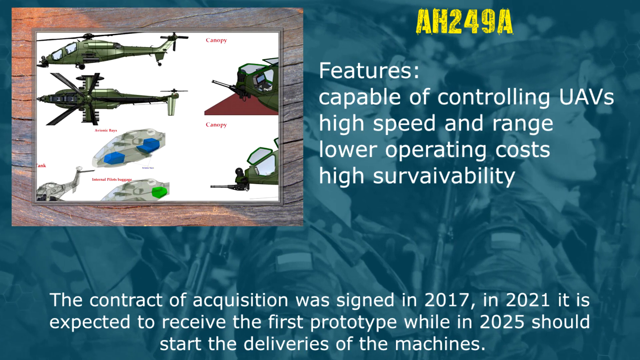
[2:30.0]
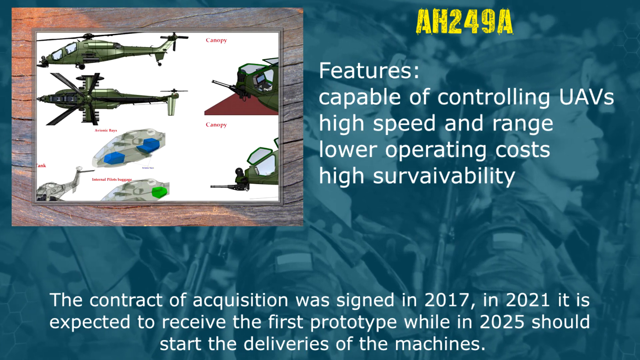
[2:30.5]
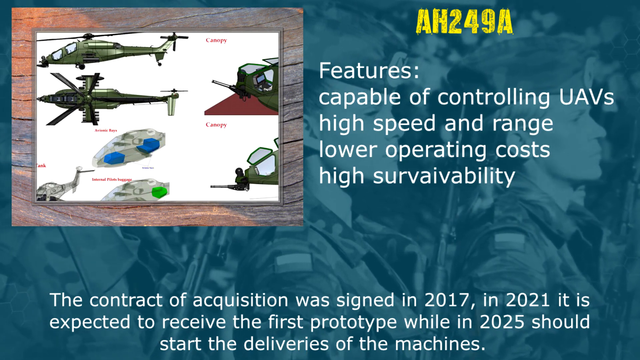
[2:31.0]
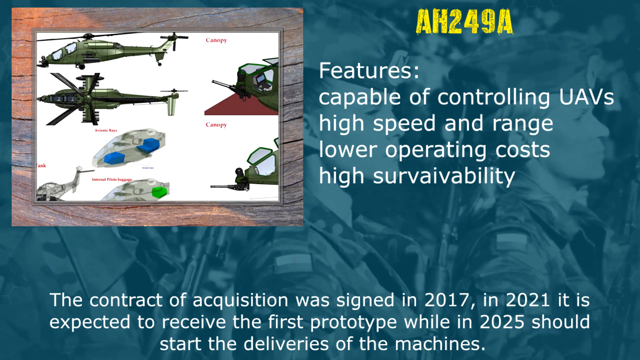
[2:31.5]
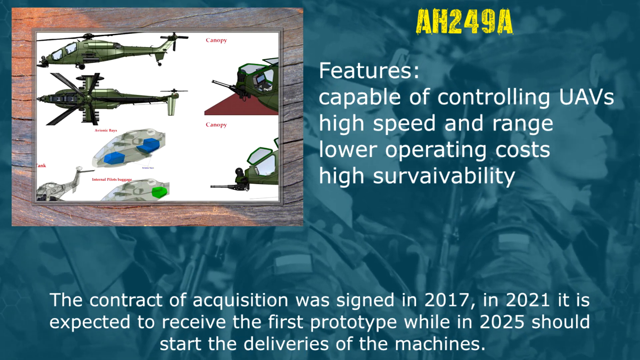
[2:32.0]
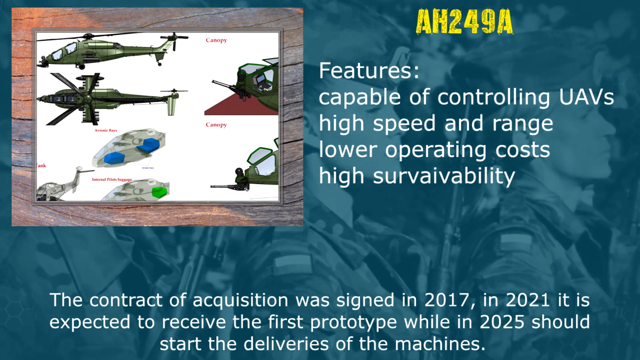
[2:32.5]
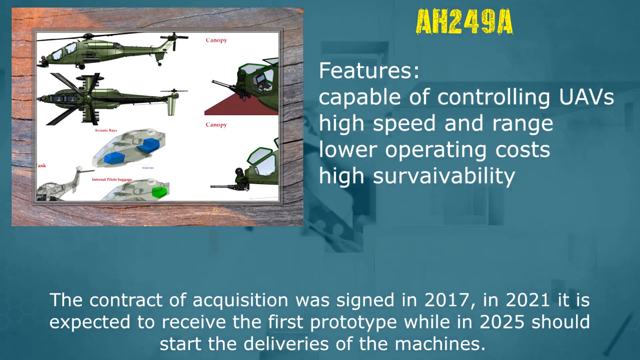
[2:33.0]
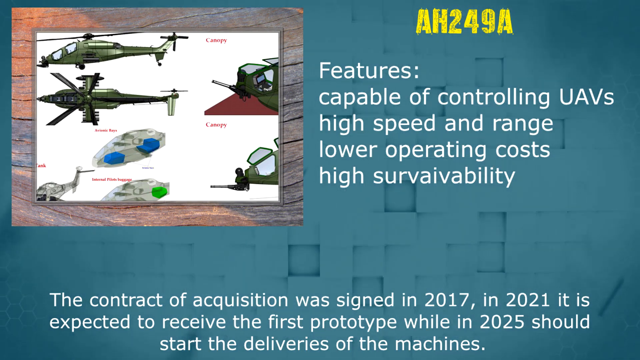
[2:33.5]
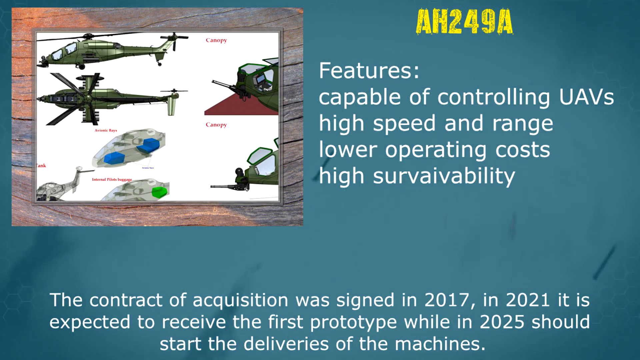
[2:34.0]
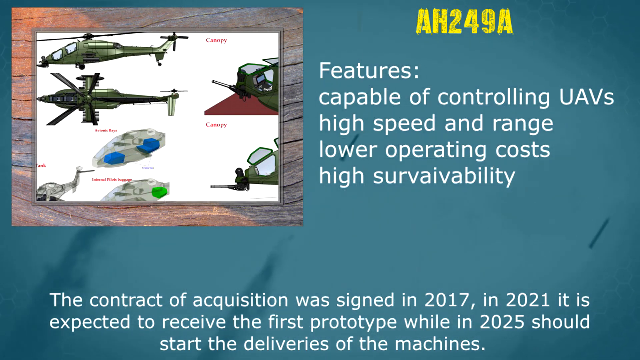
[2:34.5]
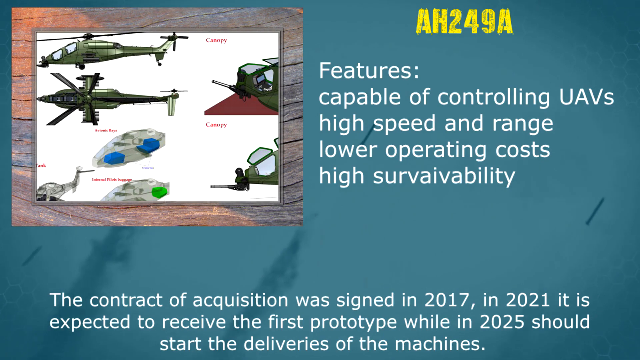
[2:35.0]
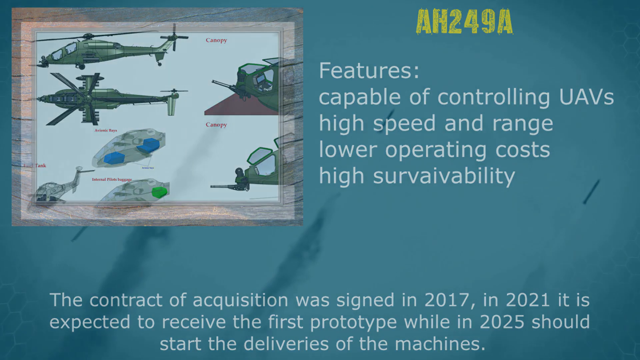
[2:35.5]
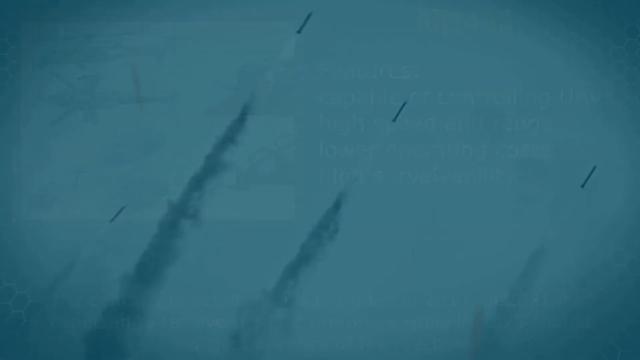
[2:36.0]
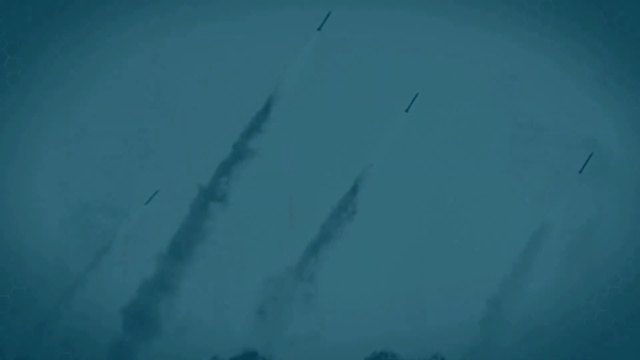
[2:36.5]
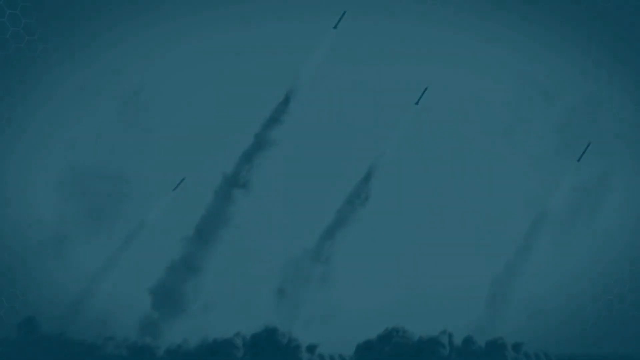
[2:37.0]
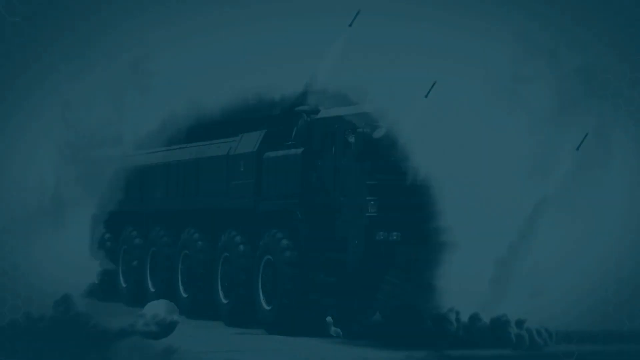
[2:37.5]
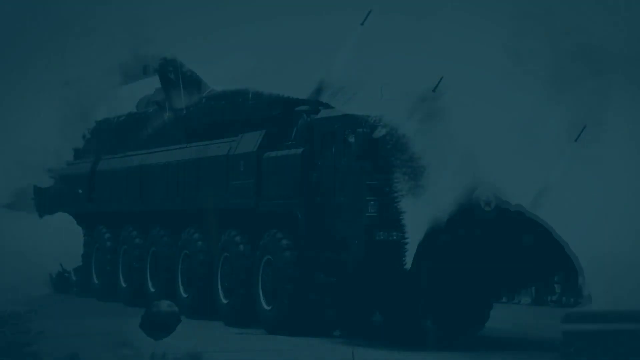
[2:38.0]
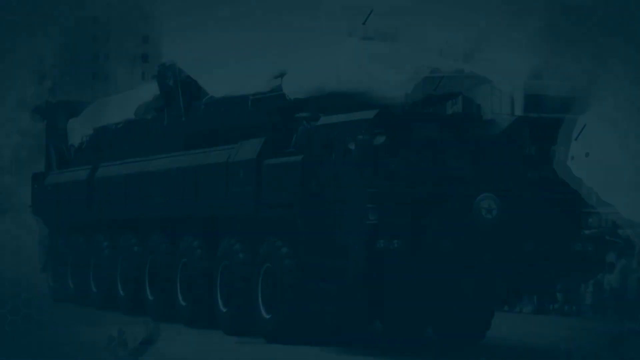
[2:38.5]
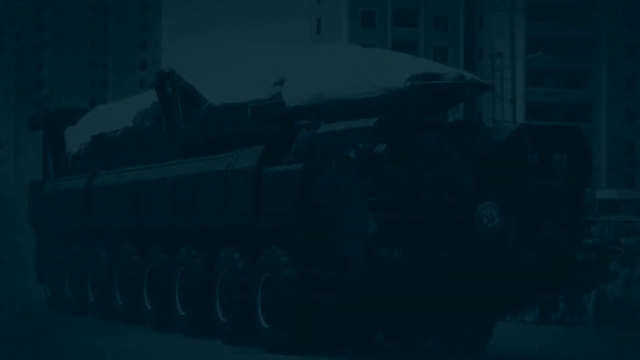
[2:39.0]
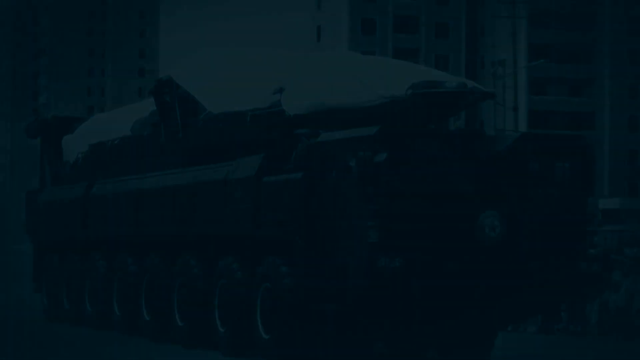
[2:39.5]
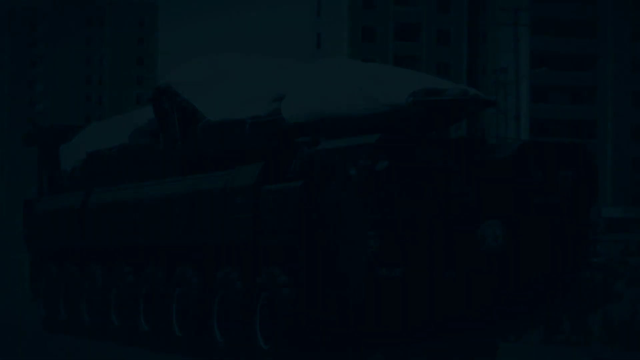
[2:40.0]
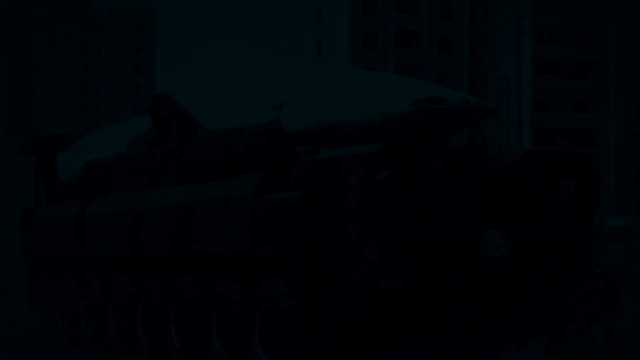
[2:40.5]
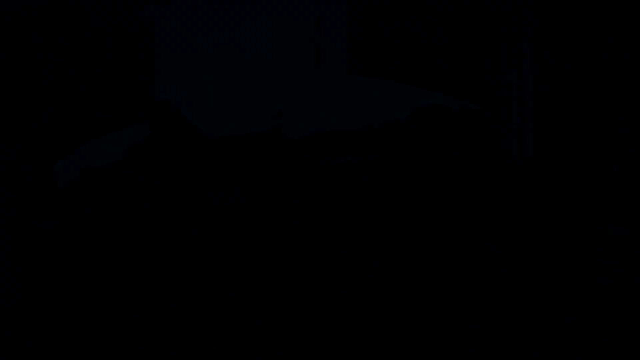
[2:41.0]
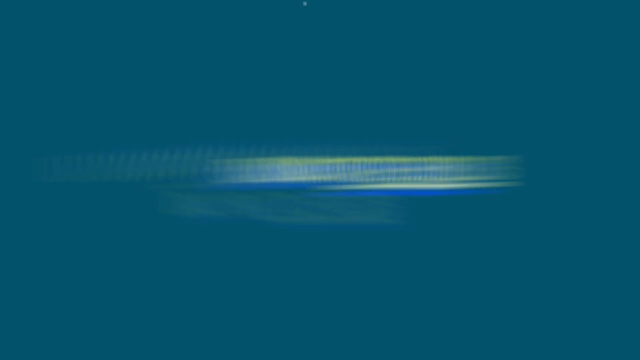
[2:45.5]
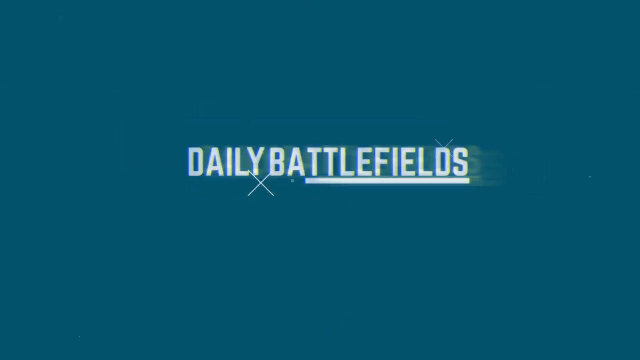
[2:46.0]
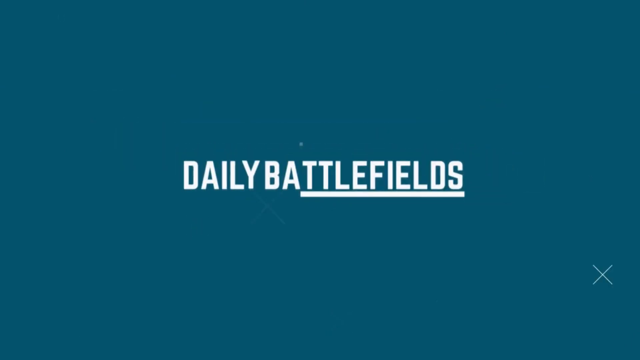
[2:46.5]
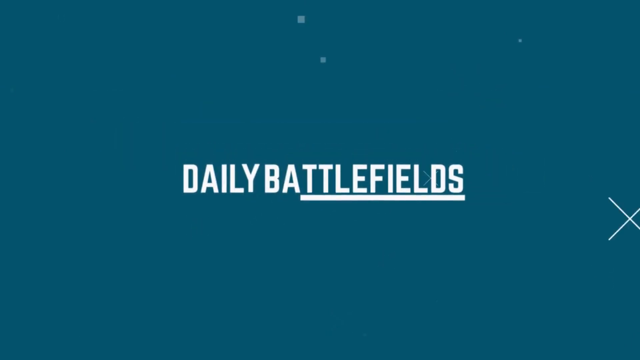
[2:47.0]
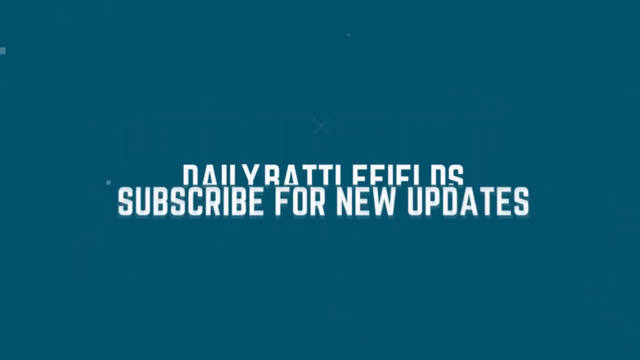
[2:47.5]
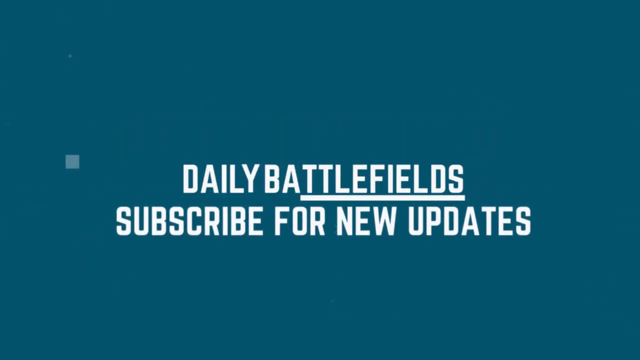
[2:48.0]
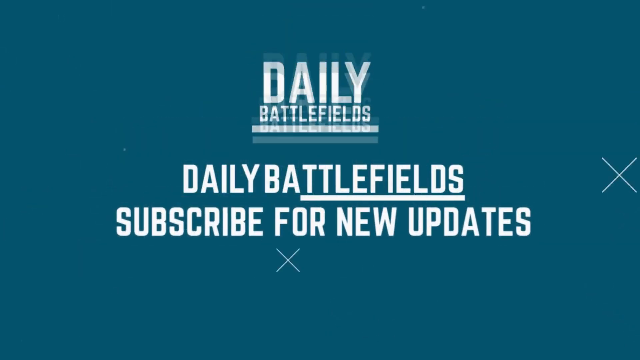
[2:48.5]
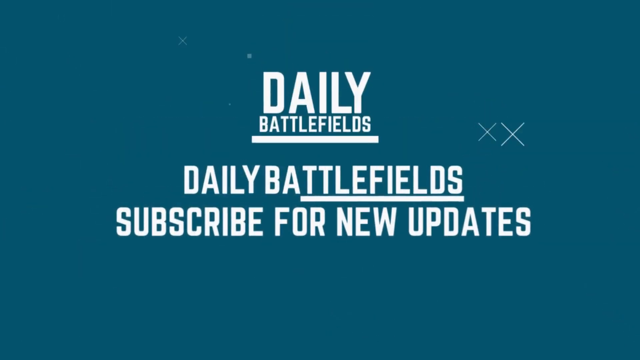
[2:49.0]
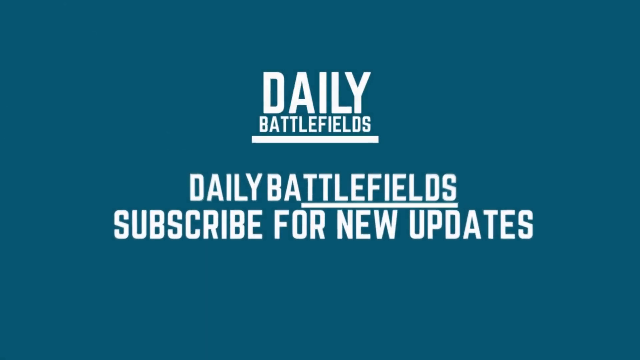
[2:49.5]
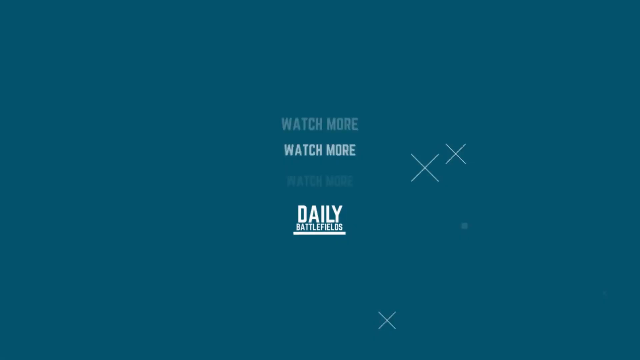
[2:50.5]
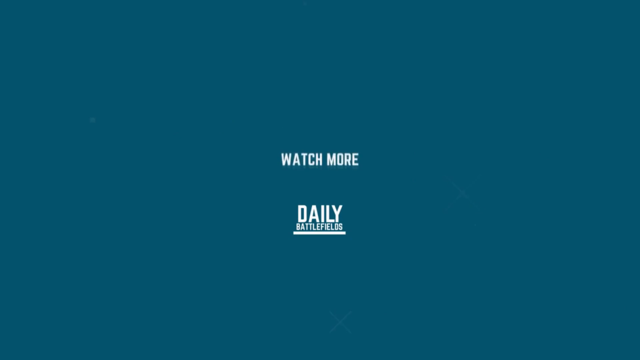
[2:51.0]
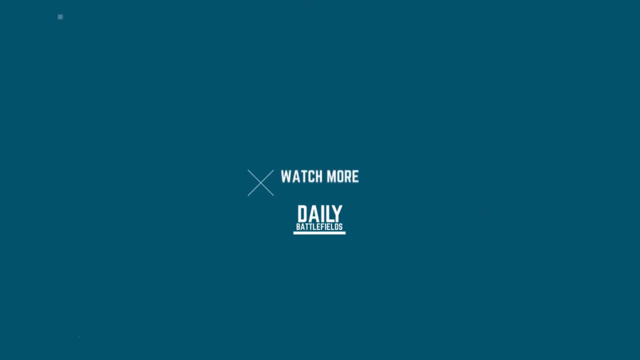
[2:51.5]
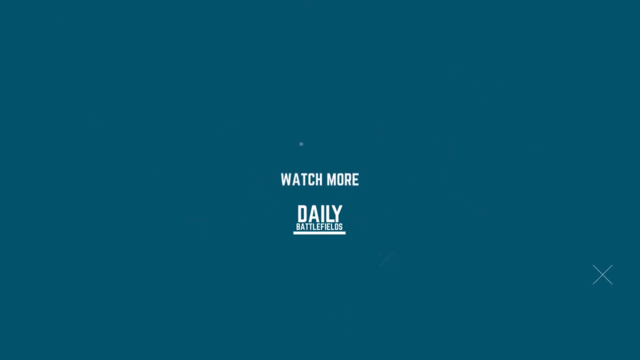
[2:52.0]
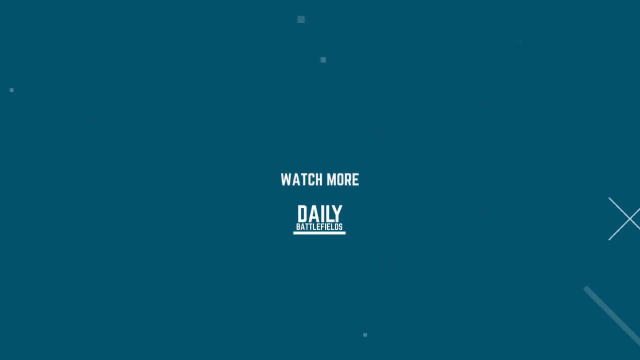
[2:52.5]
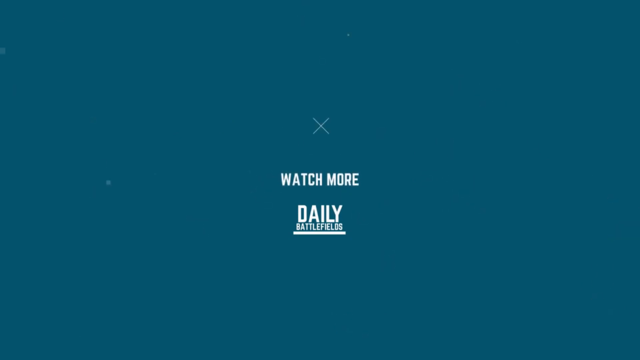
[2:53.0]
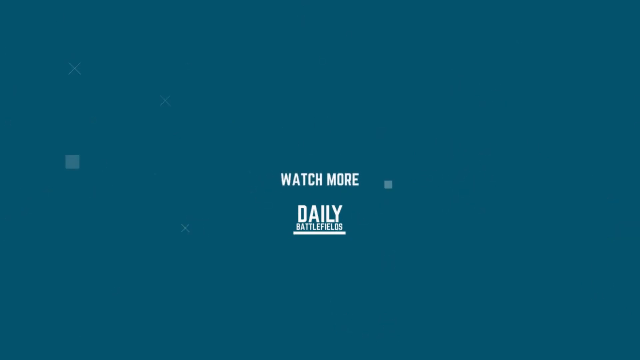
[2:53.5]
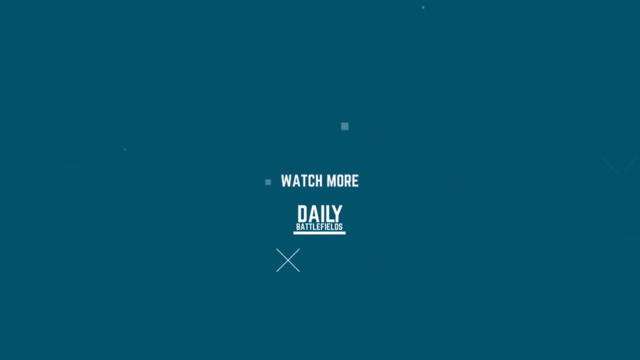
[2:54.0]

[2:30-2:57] A square in the upper left corner holds multiple different items that appear to be army airplanes and equipment of some sort. At the top right, yellow writing says "AH-249A", and below it white writing says "features" and "capable of controlling UAVs, high speed and range, lower operating cost, high survivability". Kind of dark blue pictures fade in and out in the background, going from army officials to different types of army equipment. The background then changes completely to what looks to be a dark blue color with a swirling pattern, and a blue background pops up with white letters reading "Daily Battlefields", and below that "Daily Battlefields subscribe for new updates".